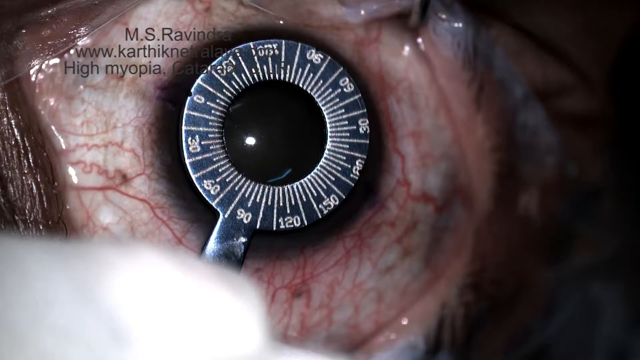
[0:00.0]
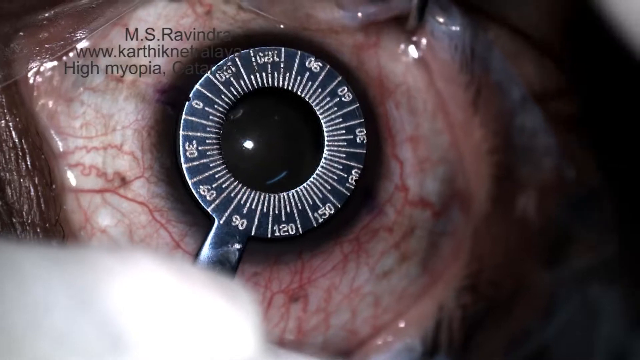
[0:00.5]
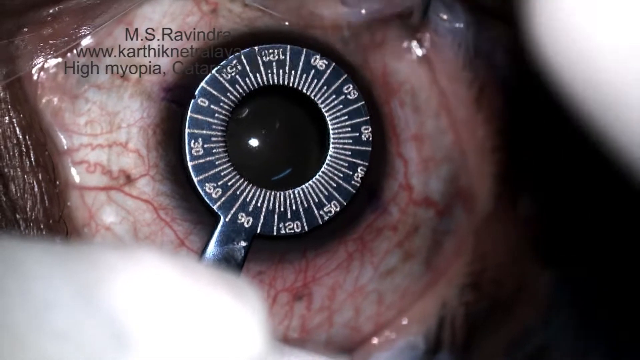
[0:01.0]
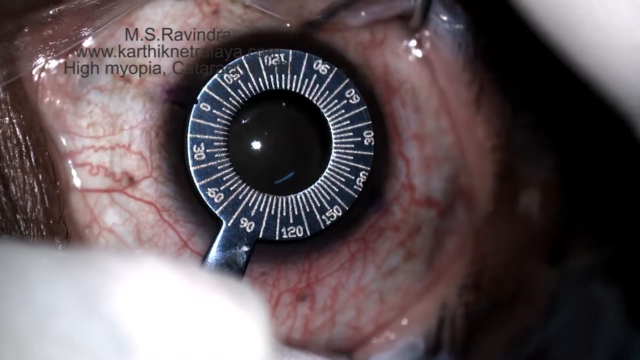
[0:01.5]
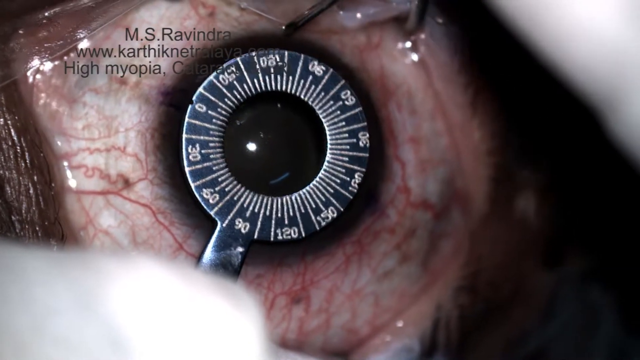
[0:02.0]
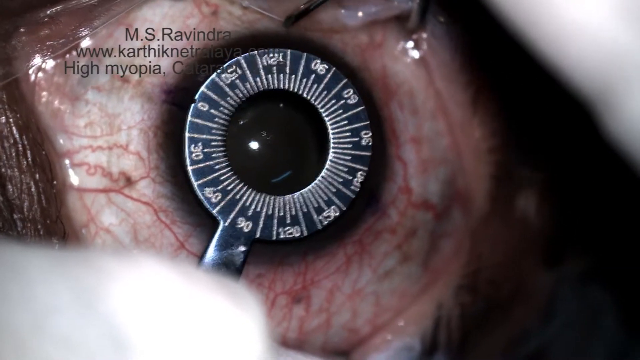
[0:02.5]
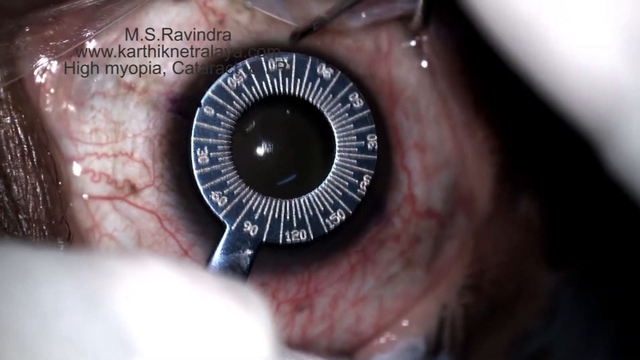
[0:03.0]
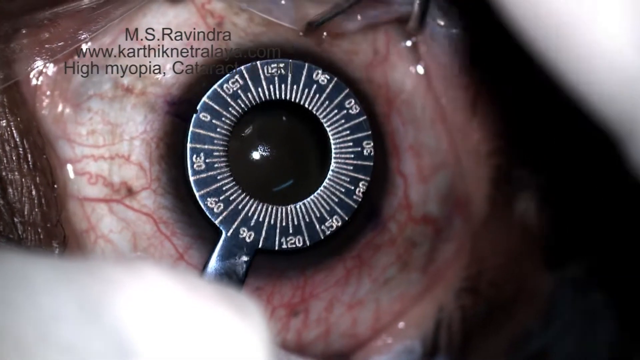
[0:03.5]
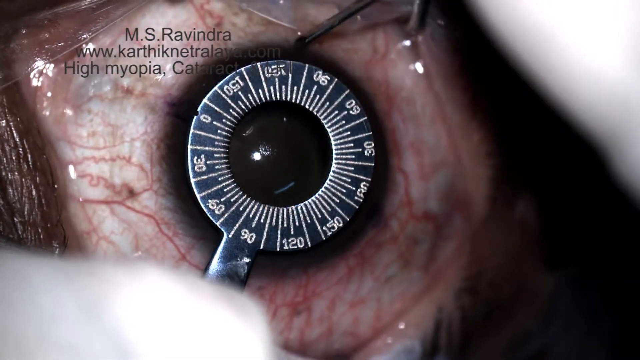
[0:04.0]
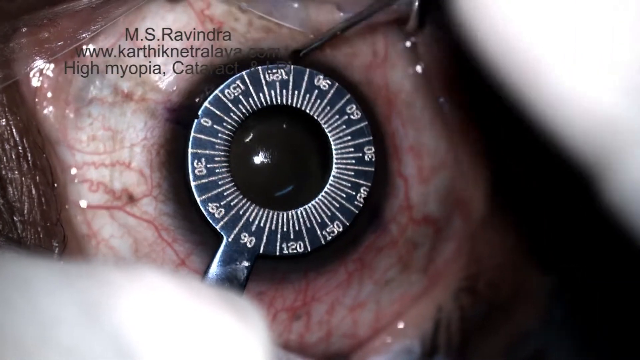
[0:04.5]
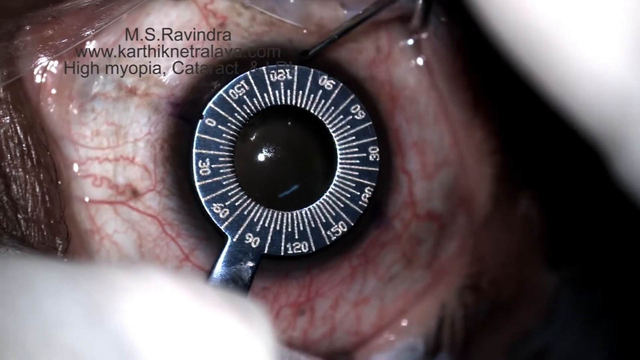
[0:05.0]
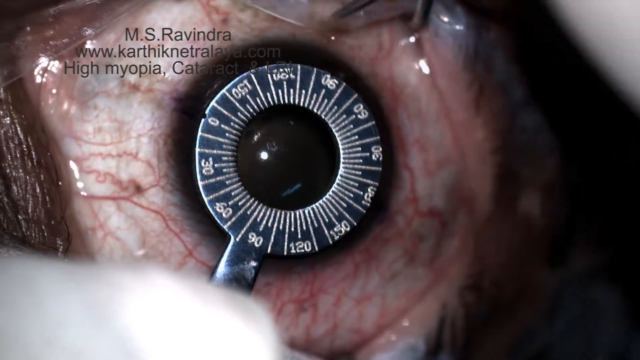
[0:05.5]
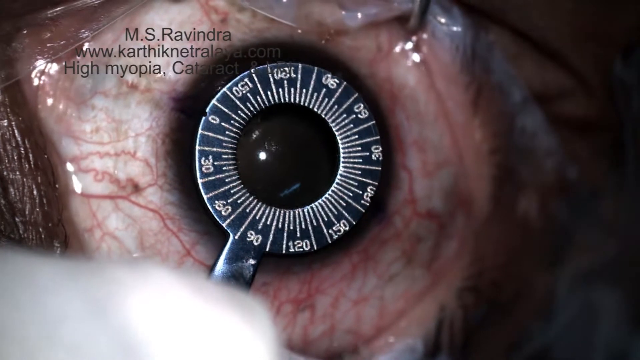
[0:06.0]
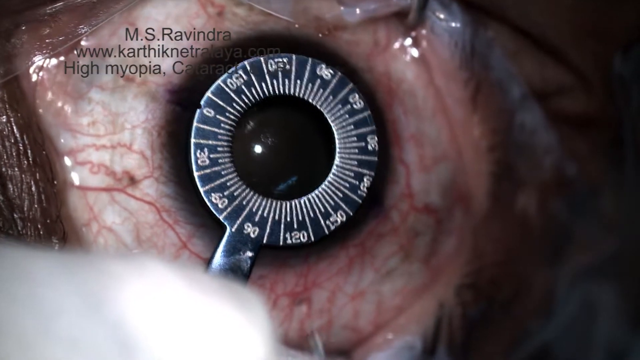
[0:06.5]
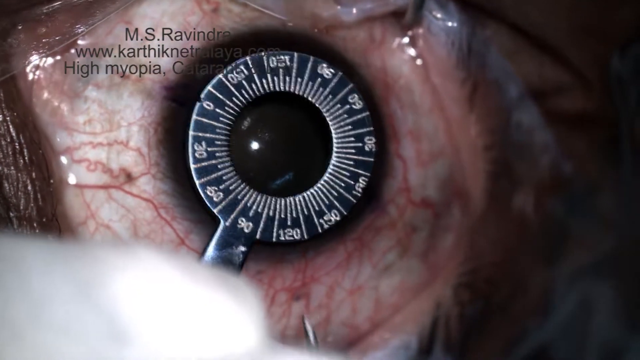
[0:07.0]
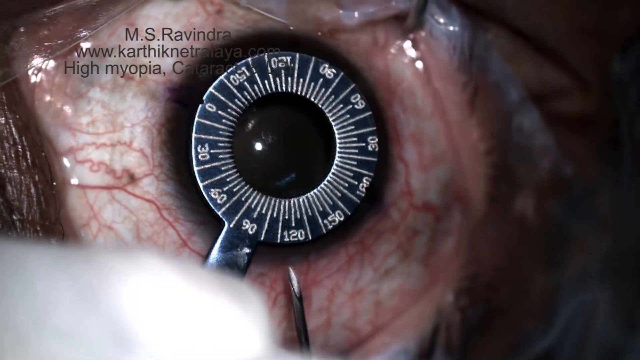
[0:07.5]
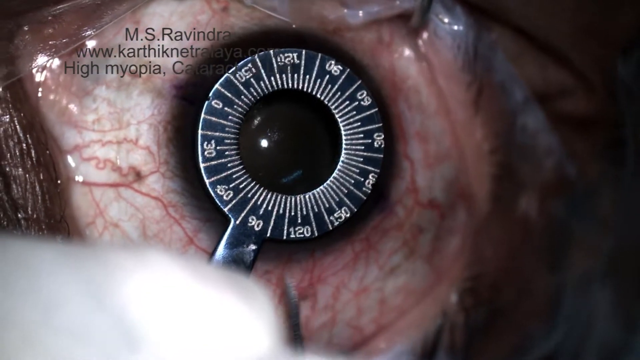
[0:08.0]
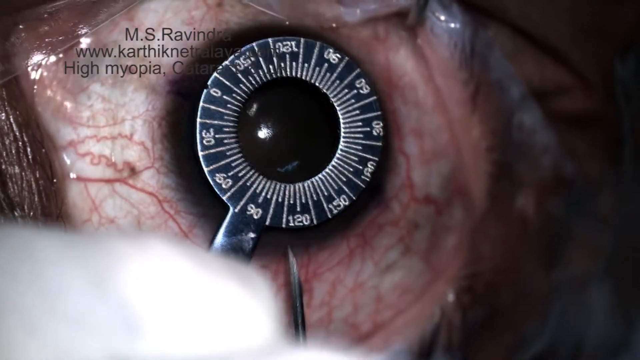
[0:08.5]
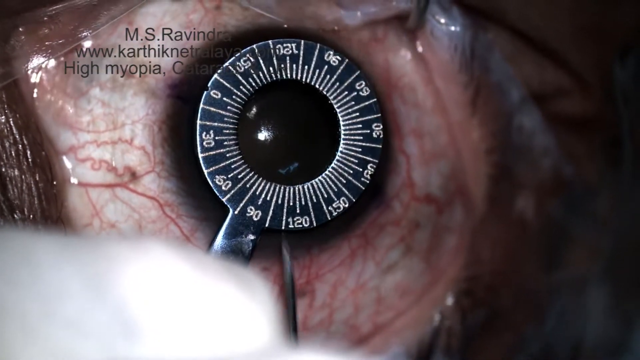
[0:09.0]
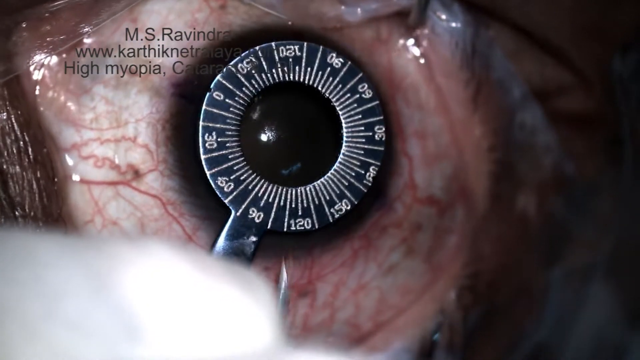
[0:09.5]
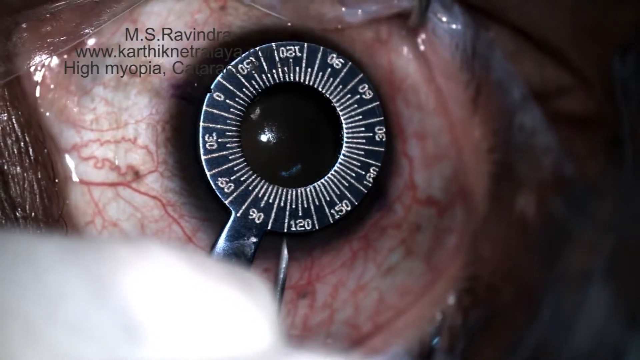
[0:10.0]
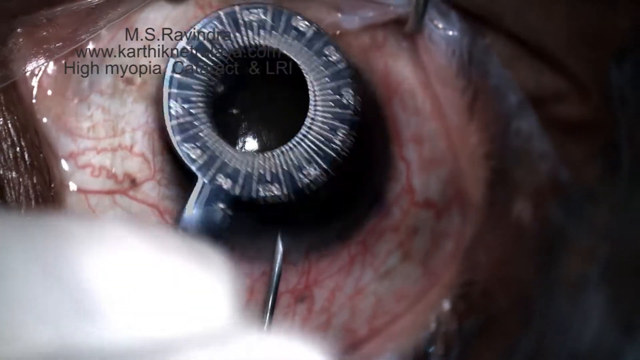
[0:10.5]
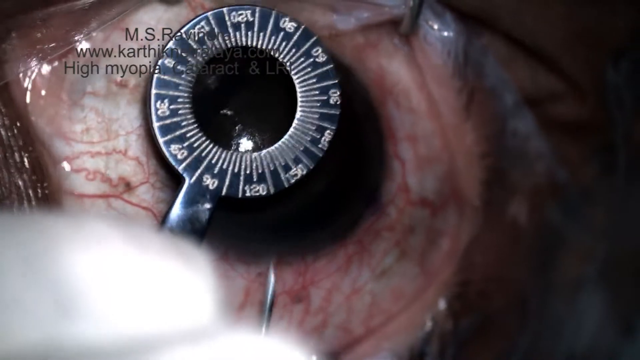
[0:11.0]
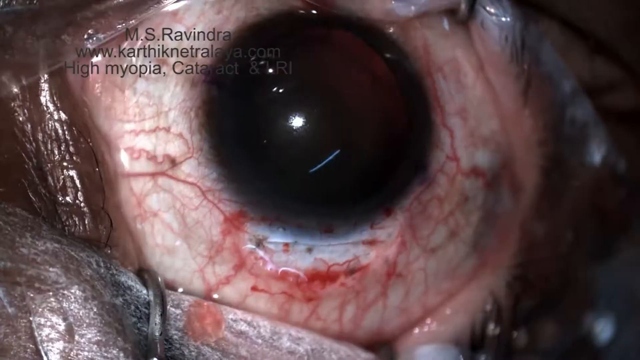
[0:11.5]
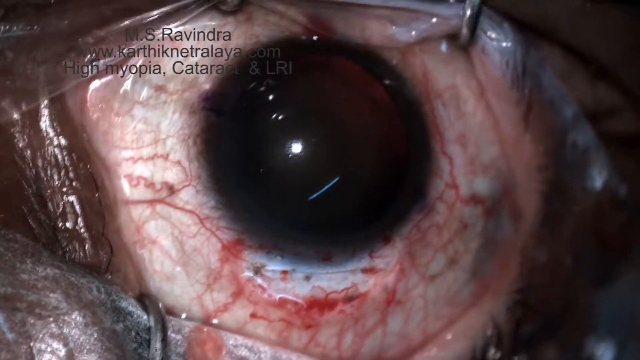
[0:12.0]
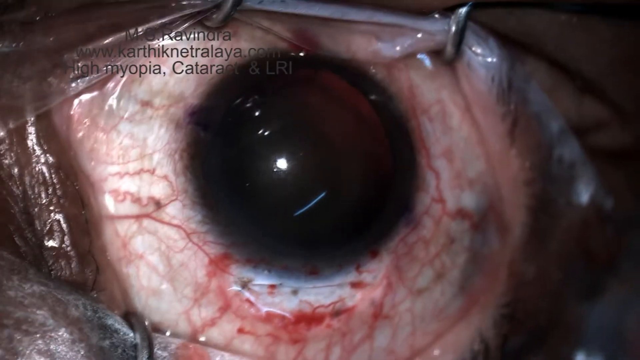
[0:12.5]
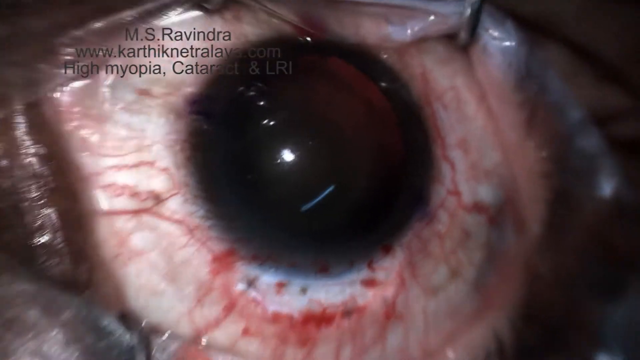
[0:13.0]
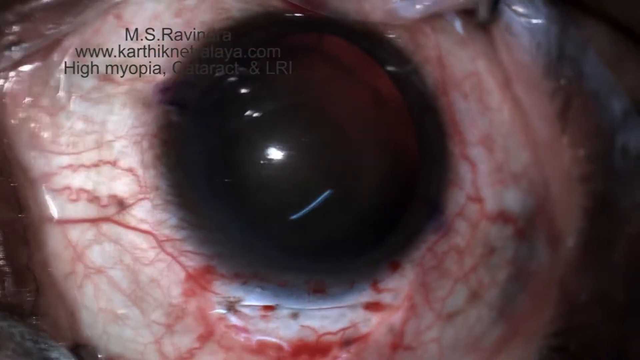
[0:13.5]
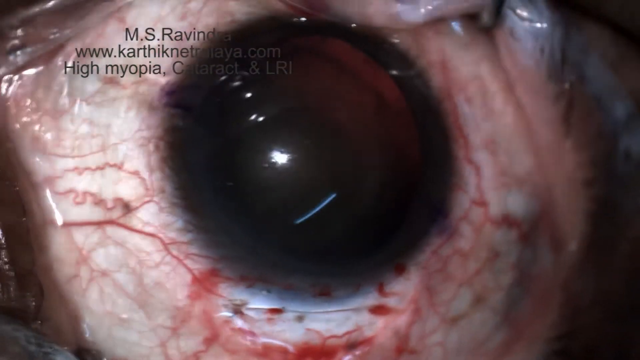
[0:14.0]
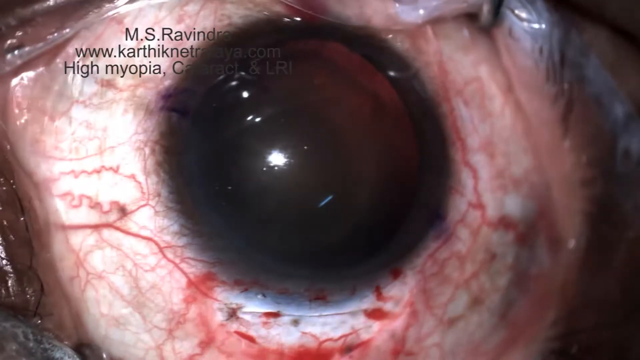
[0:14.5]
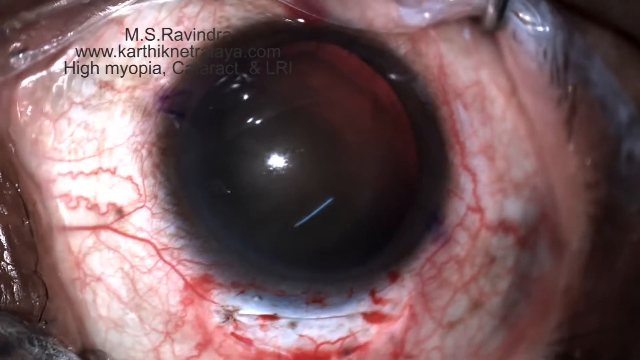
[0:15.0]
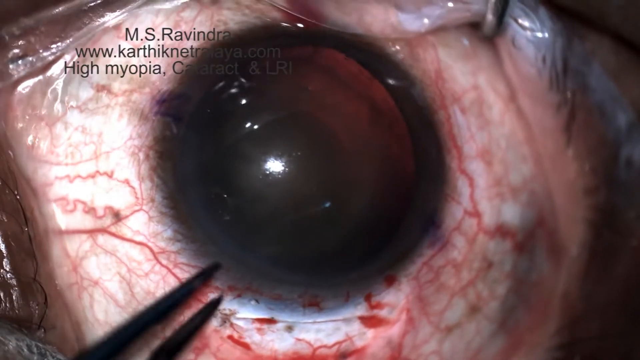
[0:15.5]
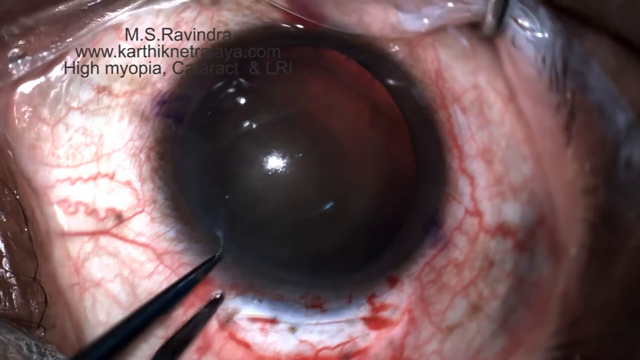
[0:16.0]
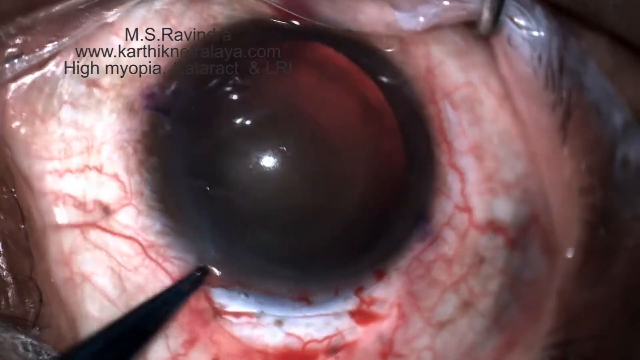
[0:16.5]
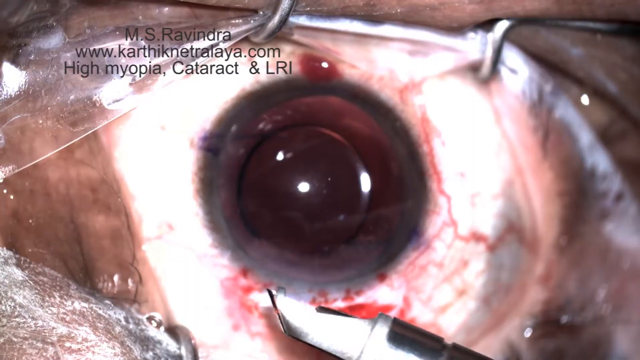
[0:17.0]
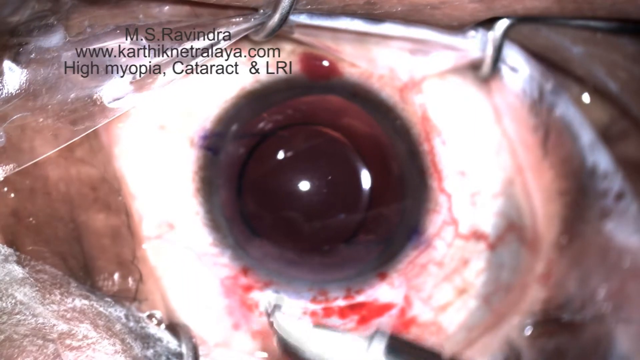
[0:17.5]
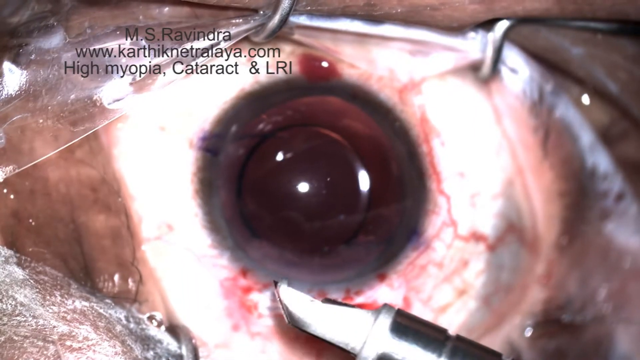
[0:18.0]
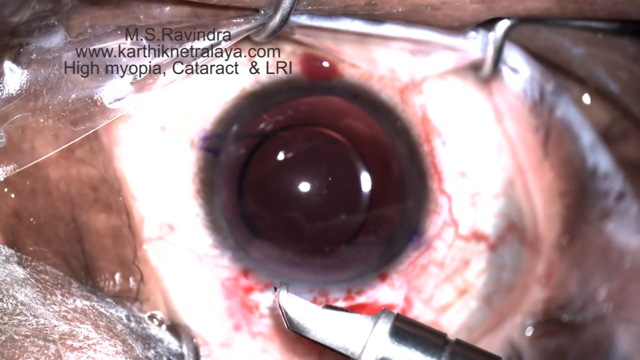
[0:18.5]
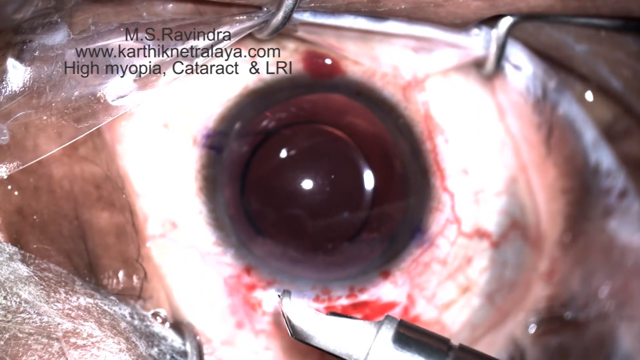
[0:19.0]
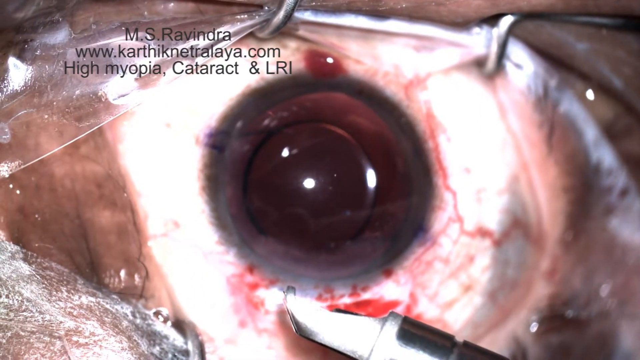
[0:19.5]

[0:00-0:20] What appears to be a single eyeball is in view, with a device pressing on the iris; the device has lines and numbers around it. This looks like some sort of medical procedure to remove part of the eye, perhaps a layer of it. A scalpel is next to the iris, so it looks like something is being removed from the eye. In the bottom left-hand corner is what appears to be a single white thumb in a glove. When the device holding the iris in place is taken away, another device is used to peel something off the eyeball. In the top left-hand corner is brown text reading "MS Ravindra".